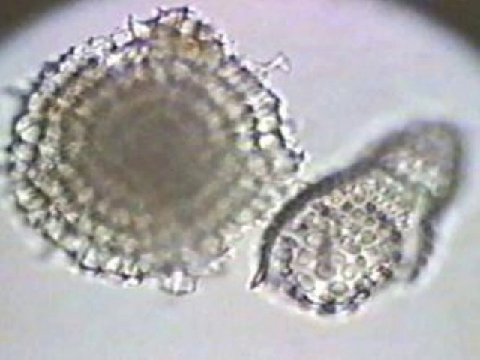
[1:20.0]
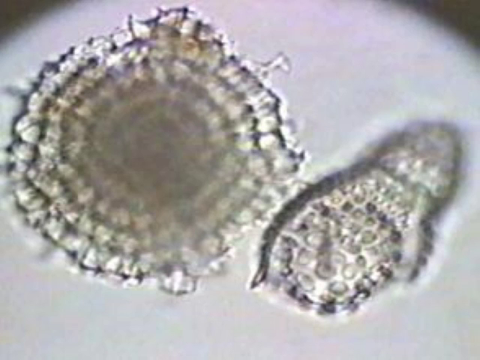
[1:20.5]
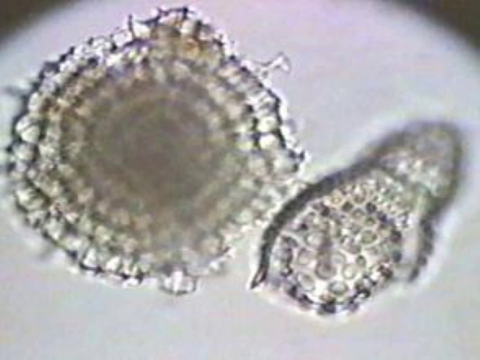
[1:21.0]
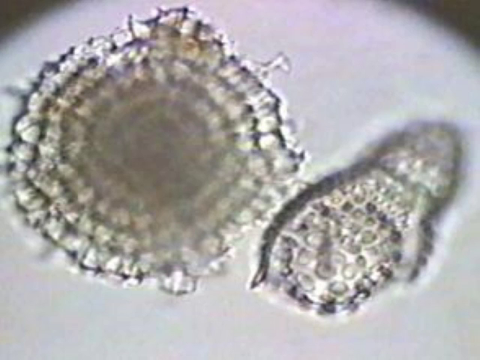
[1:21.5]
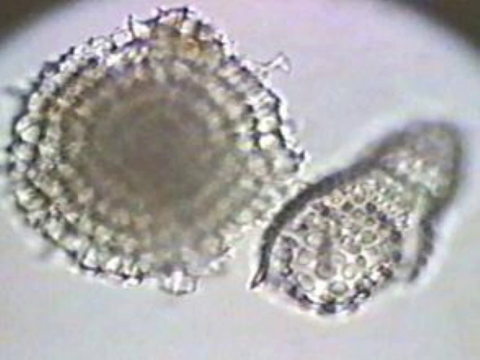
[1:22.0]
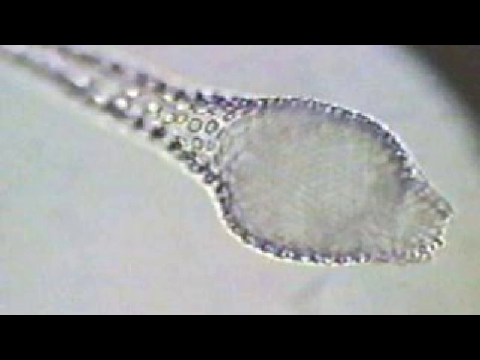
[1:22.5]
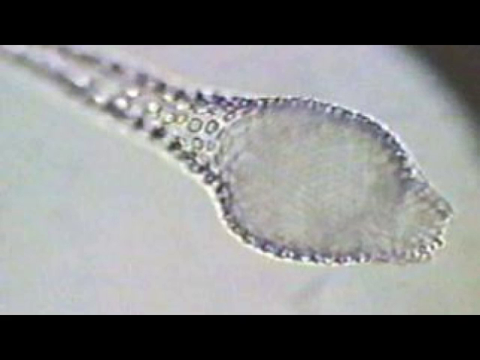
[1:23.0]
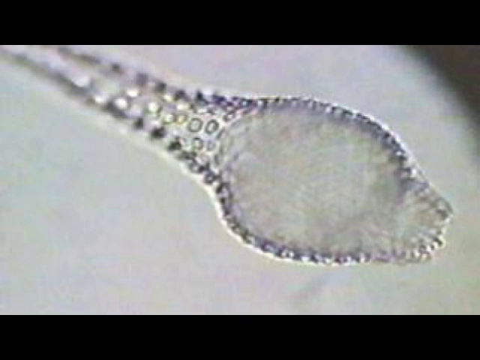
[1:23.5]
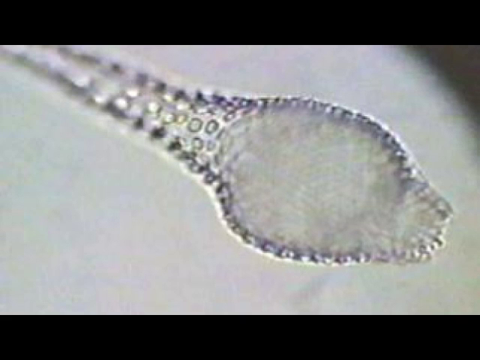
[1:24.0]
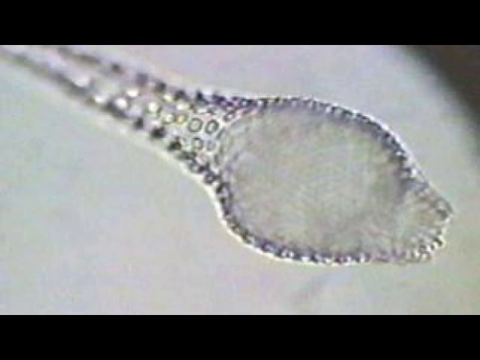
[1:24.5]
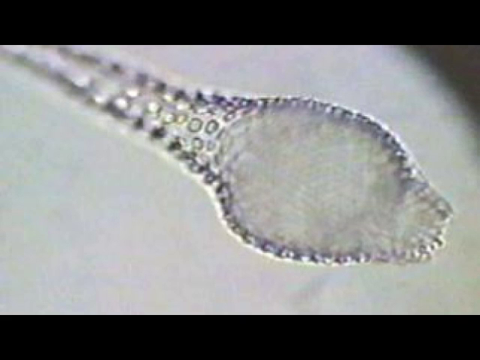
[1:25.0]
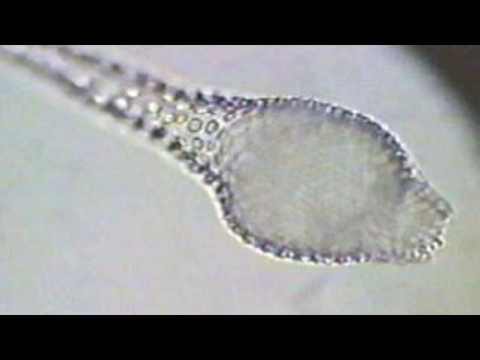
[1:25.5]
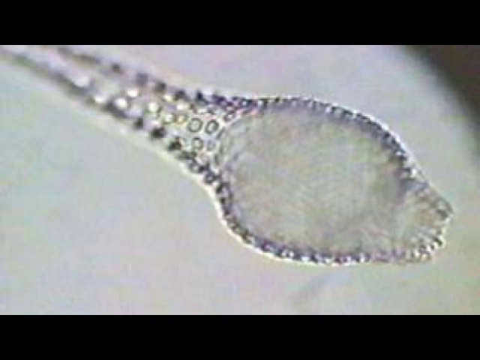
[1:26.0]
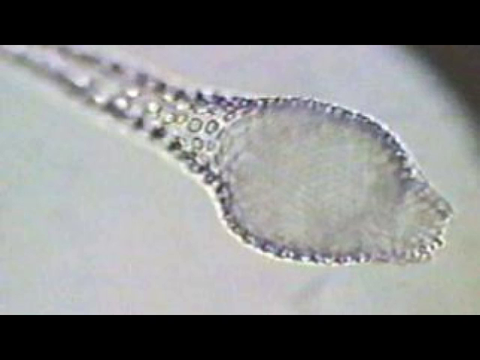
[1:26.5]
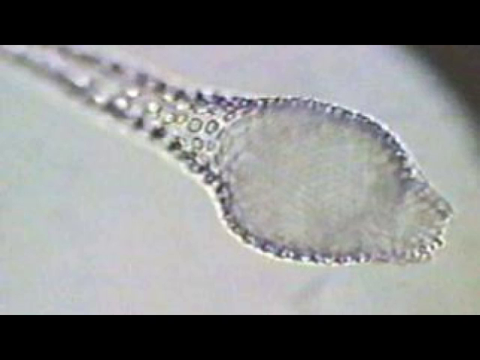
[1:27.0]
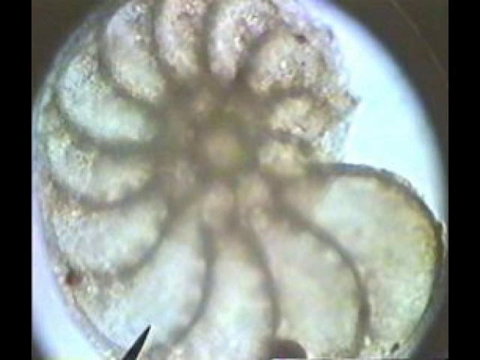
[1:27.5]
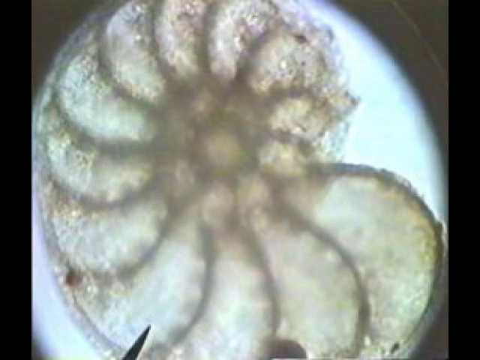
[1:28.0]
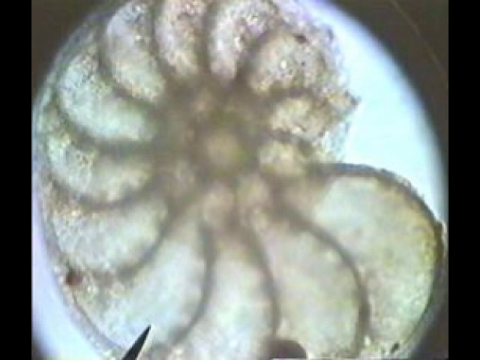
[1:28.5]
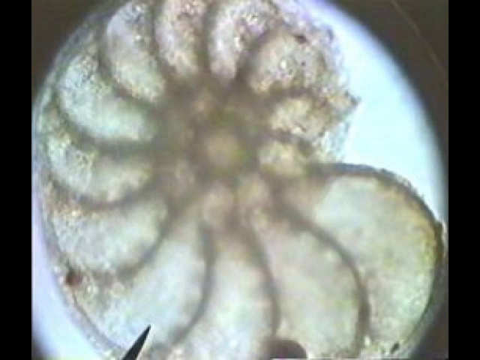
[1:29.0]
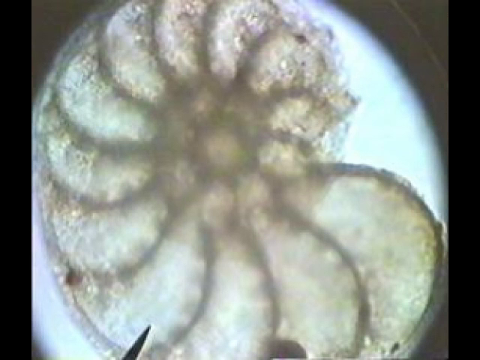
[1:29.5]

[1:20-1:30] The two images appear side by side: the larger sphere on the left and the smaller, bug-shaped object on the right. They look like they could be a single cell or an organism with multiple smaller cells attached, or smaller objects within one cell. Another image follows, black-and-white-ish, again looking like a microscopic organism. It is shaped somewhat like the end of a Q-tip: a round ball sort of in the center but toward the lower right of the screen, and, extending up and to the left, something like the stick of the Q-tip, or almost like a tail. Small bumps, small cells or circular objects are attached along the top of this Q-tip-shaped organism; it is unclear whether it is a separate organism or some organelle inside one cell. It is outlined in very small, tiny dots or circles, and the whole tail piece has the smaller dots on it, while the larger head or bulb in the middle of the screen looks almost like a cloud and is slightly opaque.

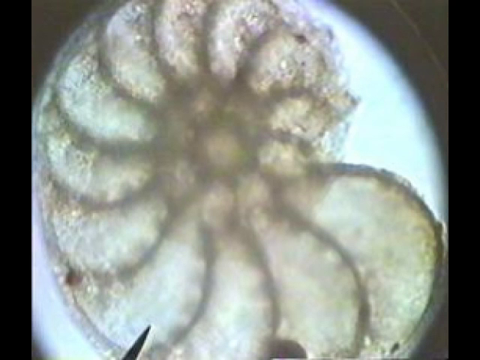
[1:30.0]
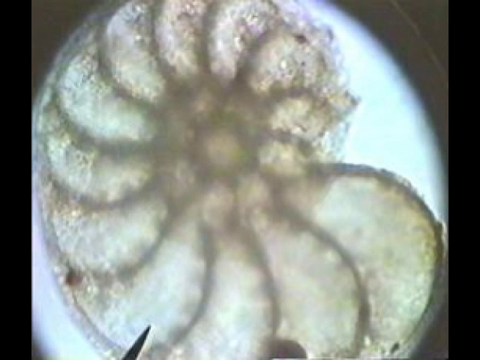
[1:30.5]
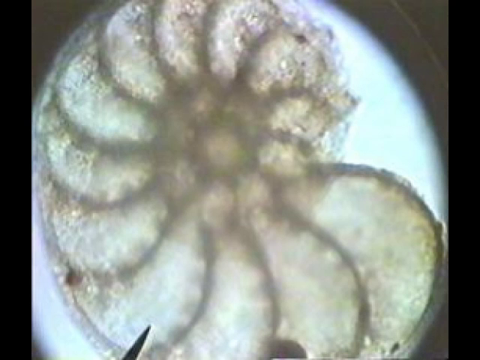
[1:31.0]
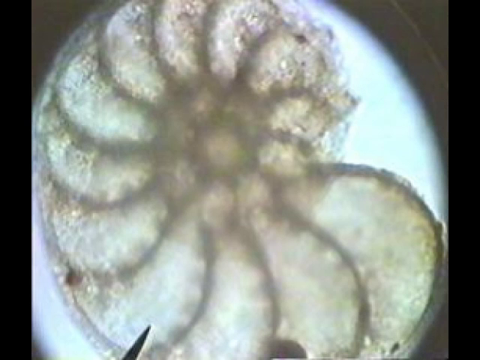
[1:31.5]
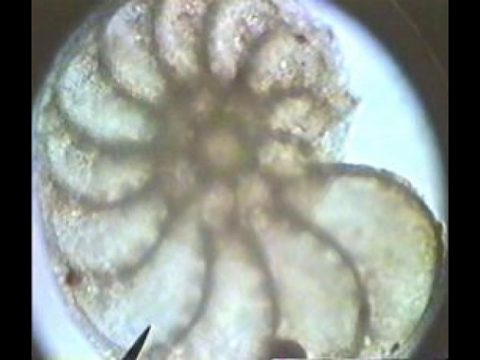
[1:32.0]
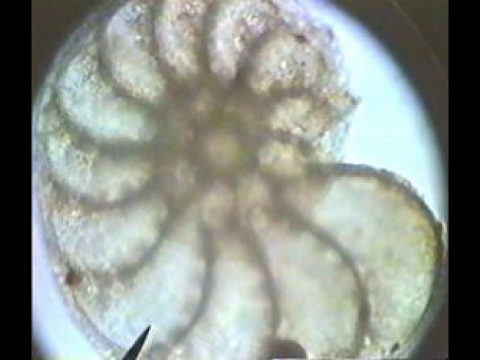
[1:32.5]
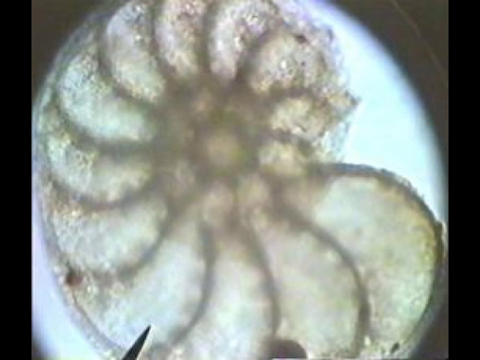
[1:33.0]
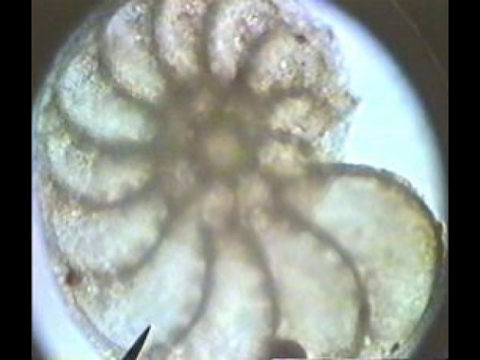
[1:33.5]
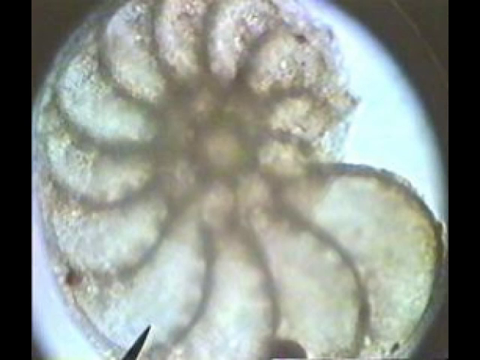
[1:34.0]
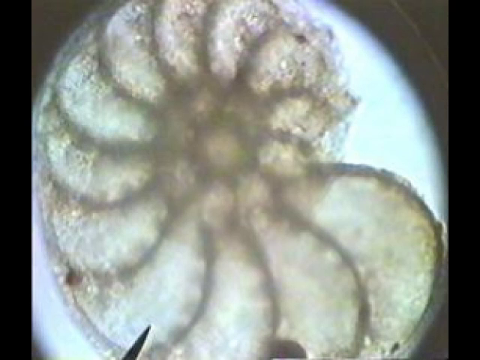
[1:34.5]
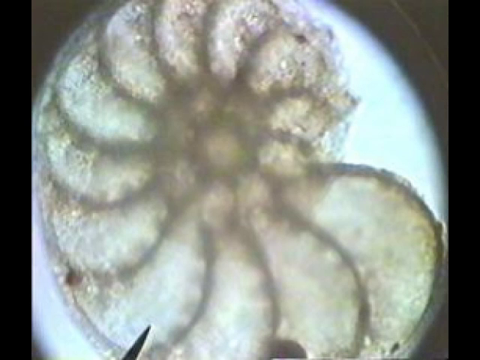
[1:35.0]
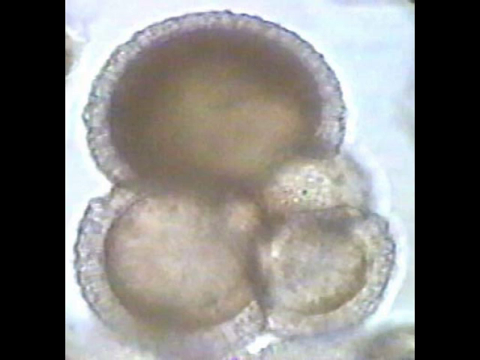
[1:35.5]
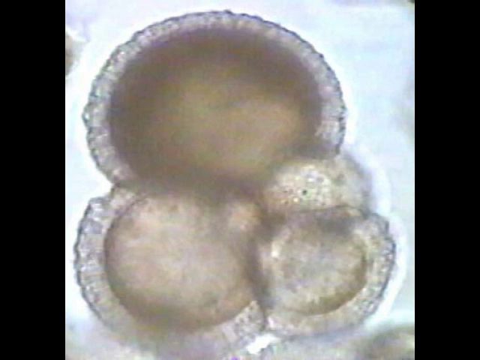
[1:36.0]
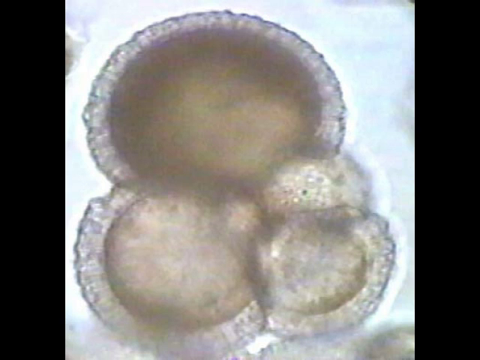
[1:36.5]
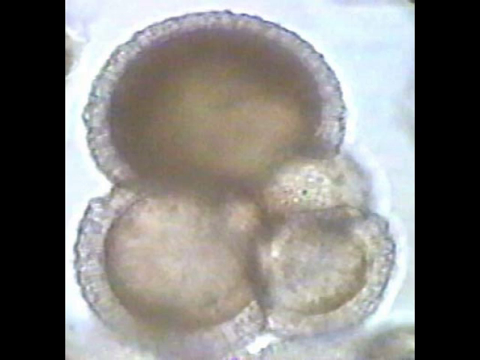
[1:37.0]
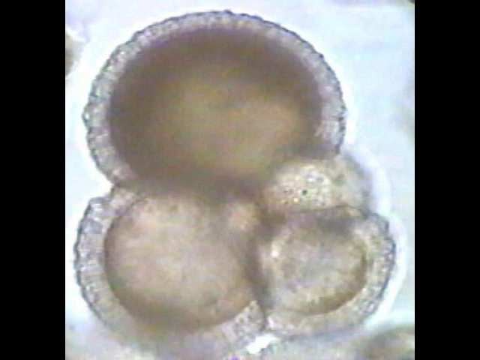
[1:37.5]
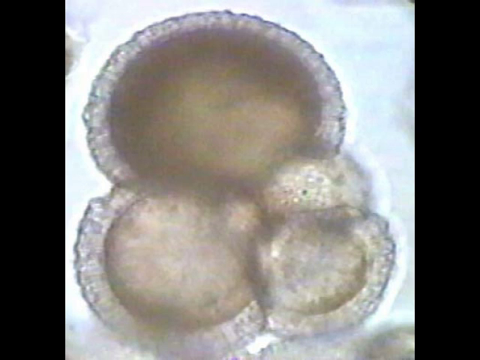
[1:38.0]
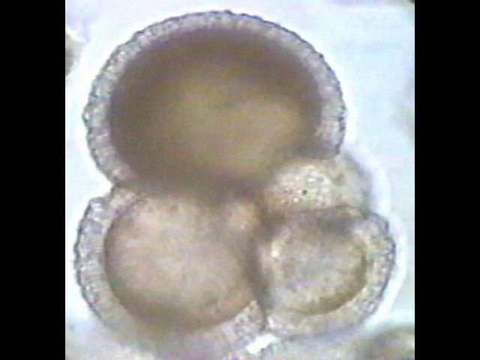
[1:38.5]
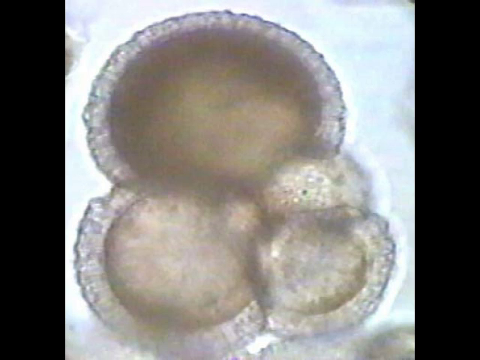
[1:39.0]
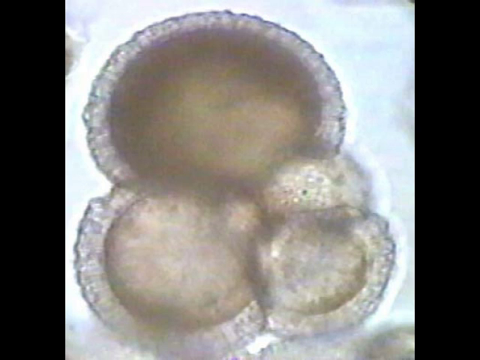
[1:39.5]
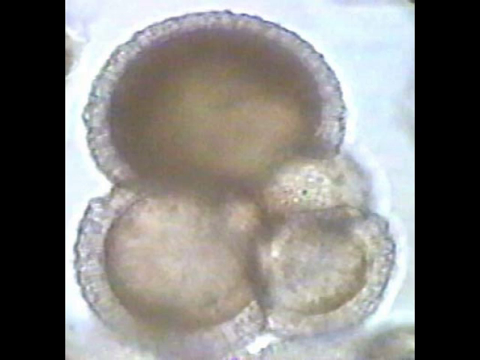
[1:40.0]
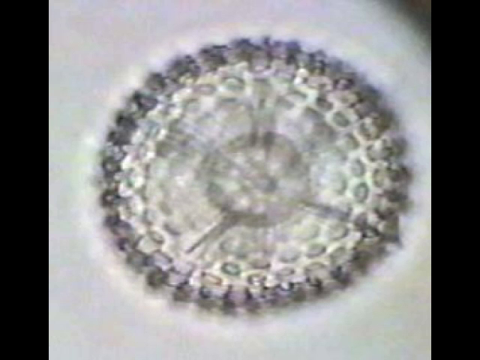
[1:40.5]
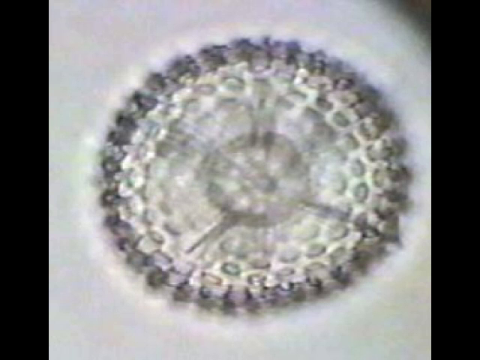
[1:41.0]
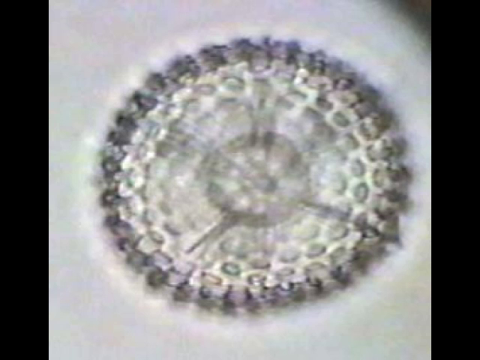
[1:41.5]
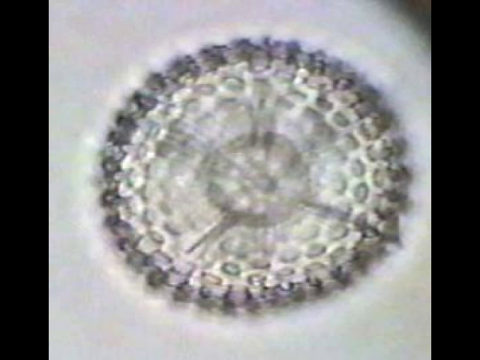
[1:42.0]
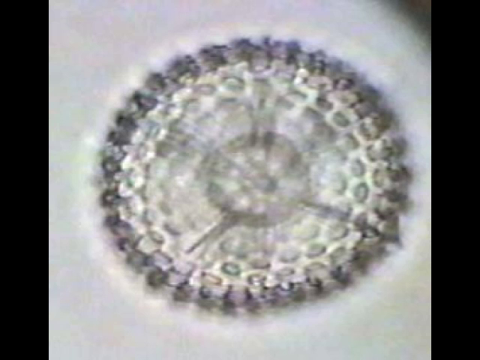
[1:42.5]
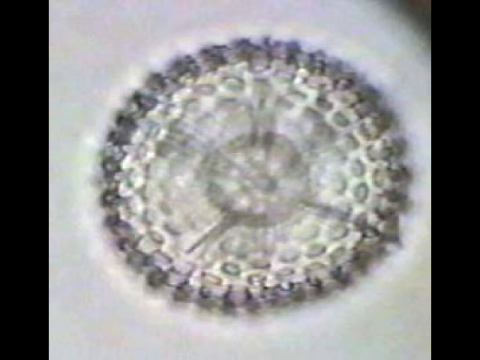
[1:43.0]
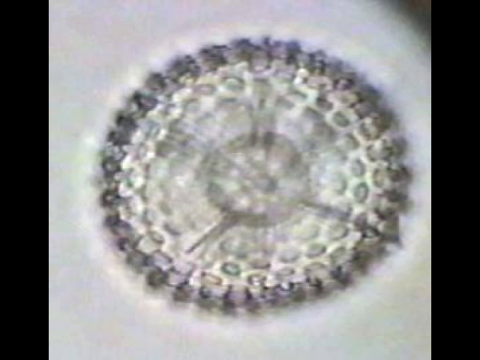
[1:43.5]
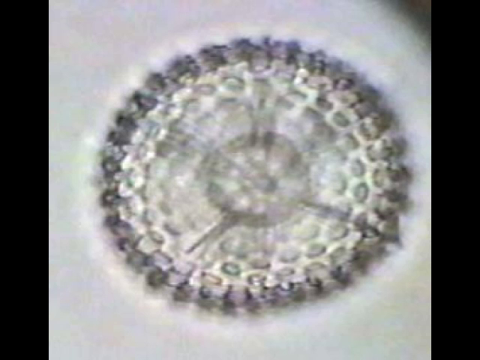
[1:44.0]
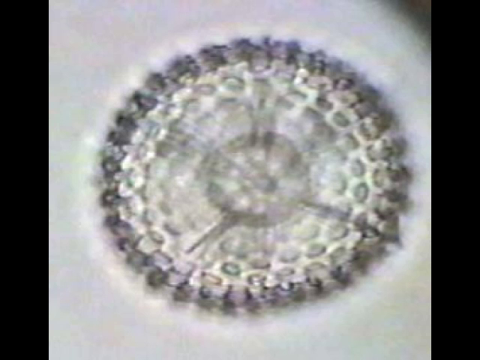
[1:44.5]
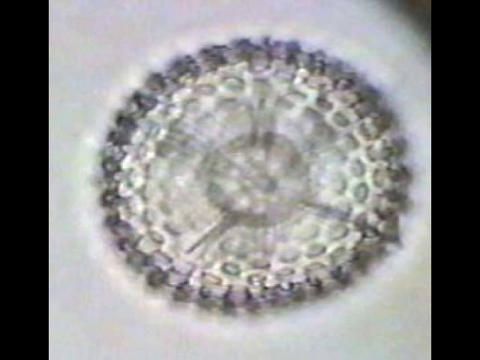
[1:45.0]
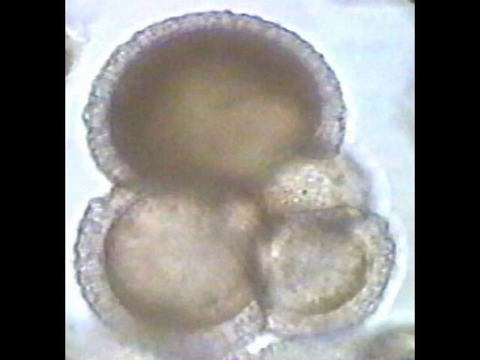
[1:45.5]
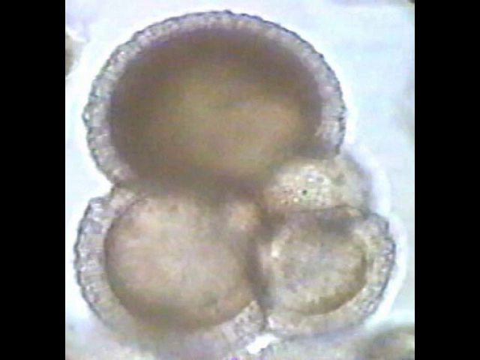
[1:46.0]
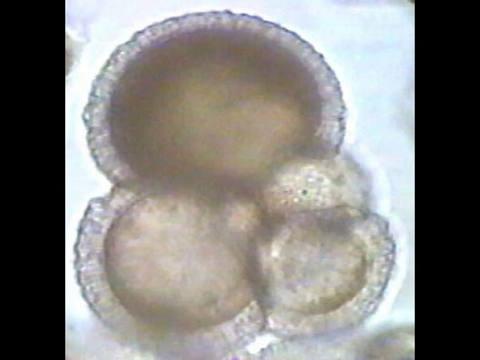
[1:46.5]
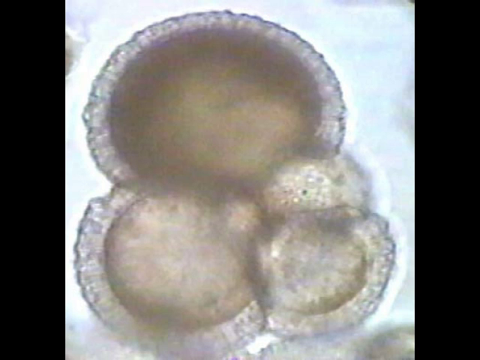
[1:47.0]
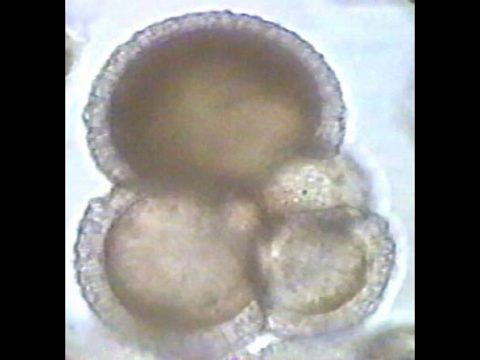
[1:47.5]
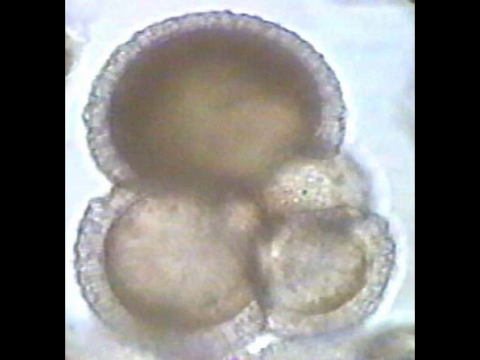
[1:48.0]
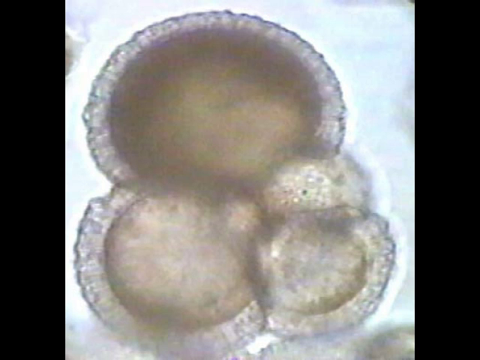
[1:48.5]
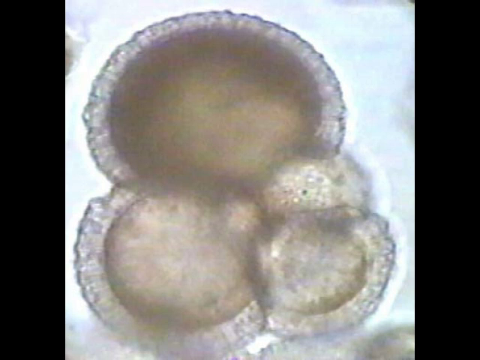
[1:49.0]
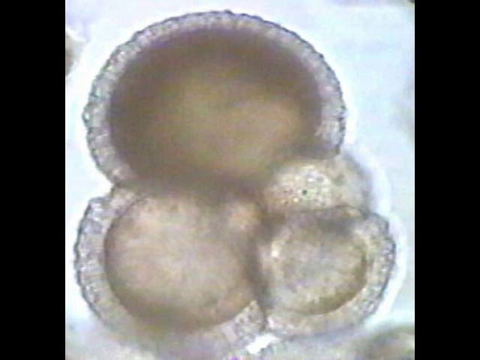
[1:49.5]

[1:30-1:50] The next image shows something that looks like a cockle shell, made of small shapes that look like apple slices. Starting from a center, the same pattern repeats around it, swirling outward and getting bigger and bigger until it ends. It is seen under a microscope but almost looks like it is placed on a white disk. Another image then shows four circular objects of varying sizes attached together. A larger circle at the top is reddish brown in the center with an edge or rind around it, and is tightly connected to a slightly smaller circle to its bottom left, which is attached to an even smaller circle to the bottom right. Between the bottom-right circle and the top center circle is another circle that looks kind of wet underneath both and is connected to both. Around the outer edge of the entire cluster is what looks like a rind or layer that looks almost like geodes or rocks, rocky and bumpy around the edge. The video then returns to the earlier image of the spherical galaxy of cells with smaller, bumpy cells attached to it.